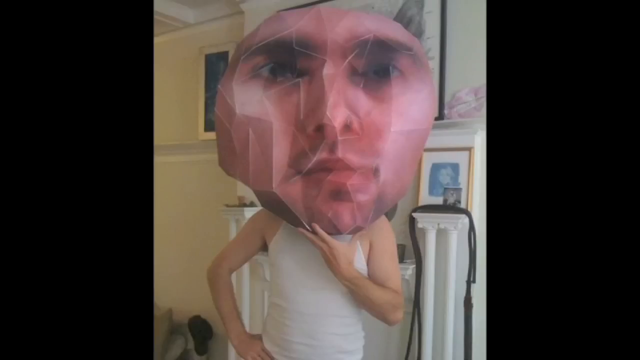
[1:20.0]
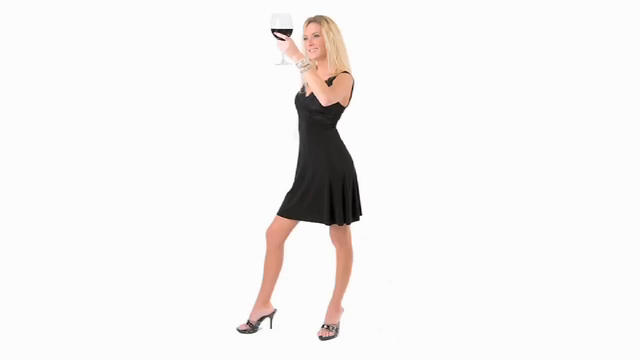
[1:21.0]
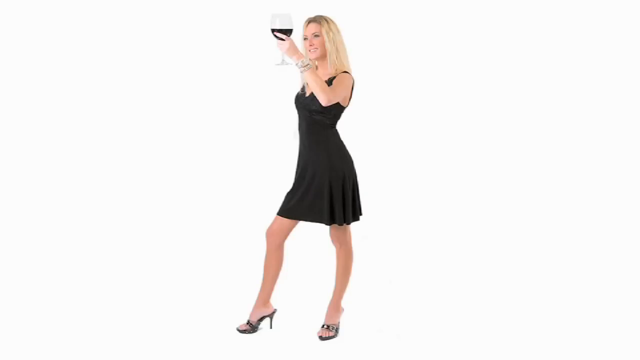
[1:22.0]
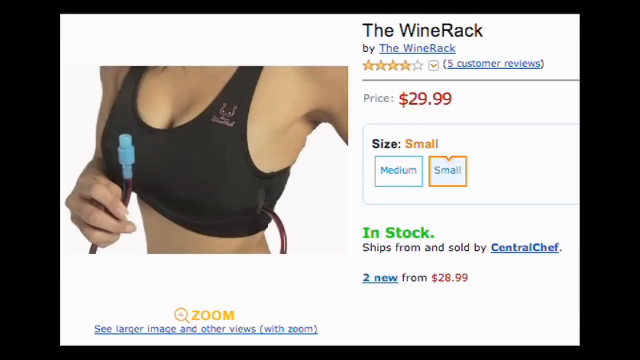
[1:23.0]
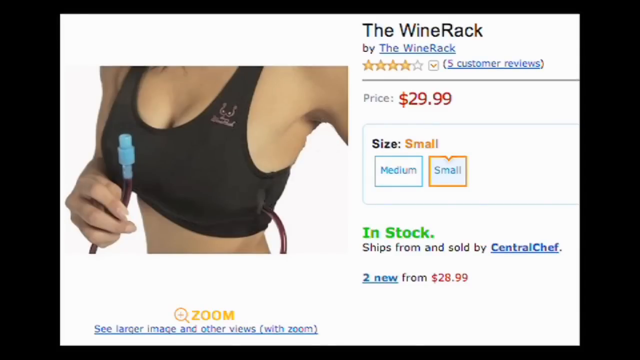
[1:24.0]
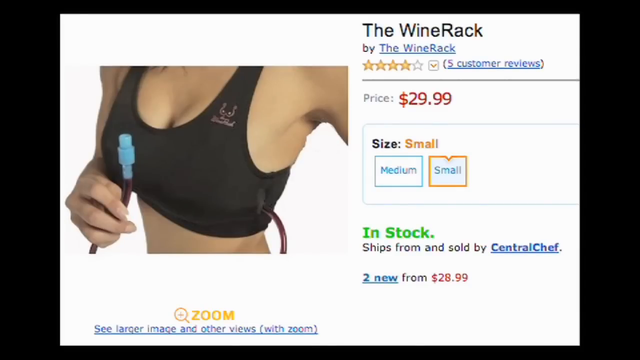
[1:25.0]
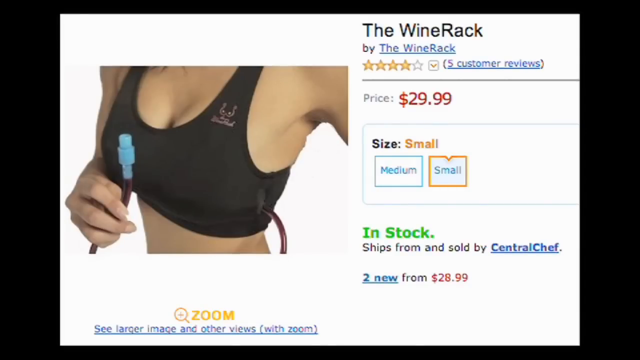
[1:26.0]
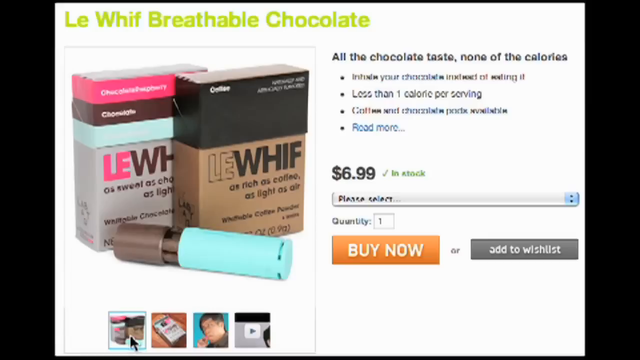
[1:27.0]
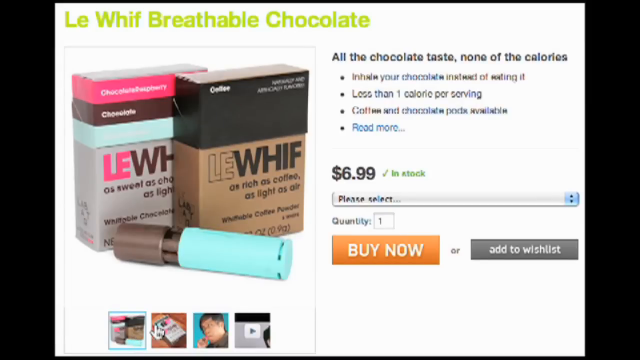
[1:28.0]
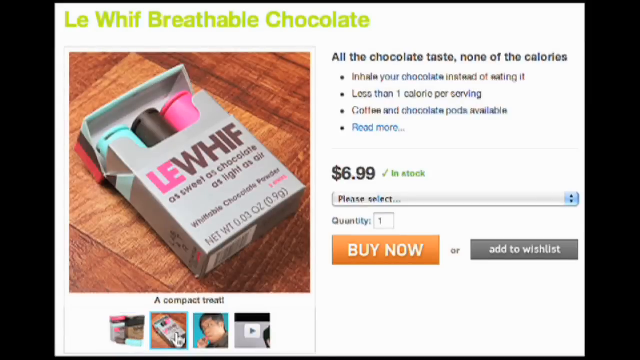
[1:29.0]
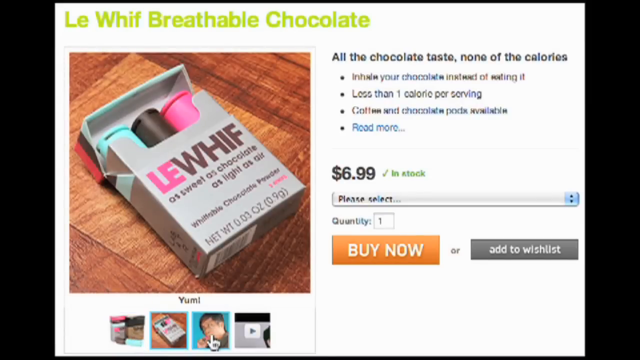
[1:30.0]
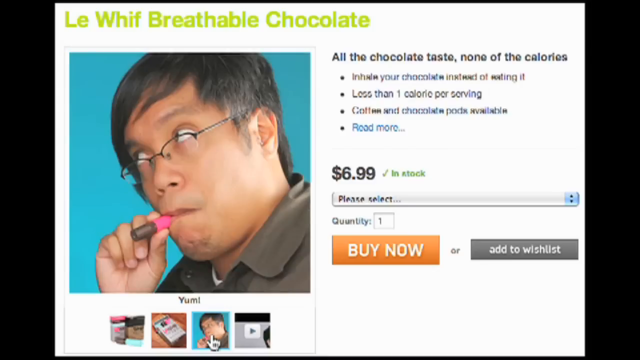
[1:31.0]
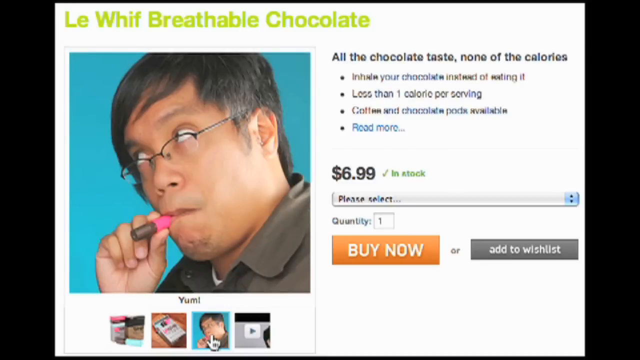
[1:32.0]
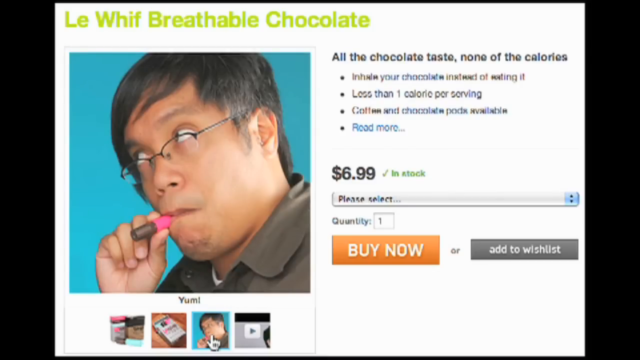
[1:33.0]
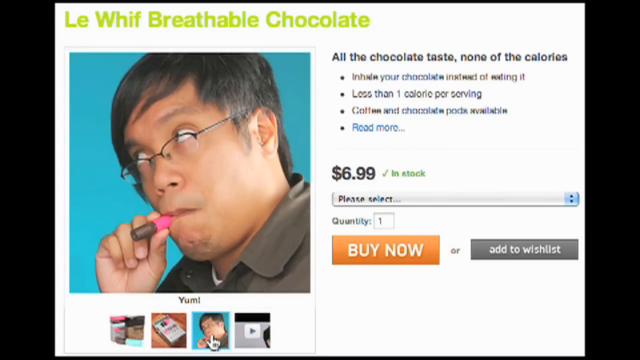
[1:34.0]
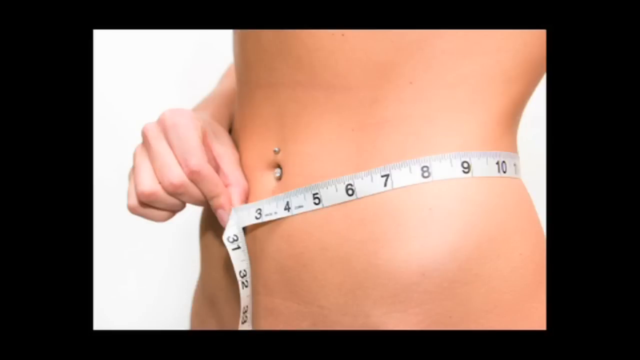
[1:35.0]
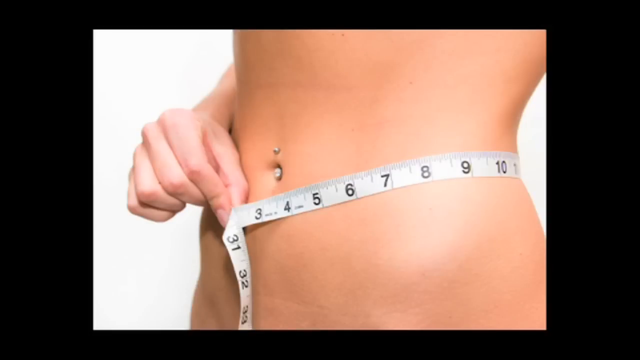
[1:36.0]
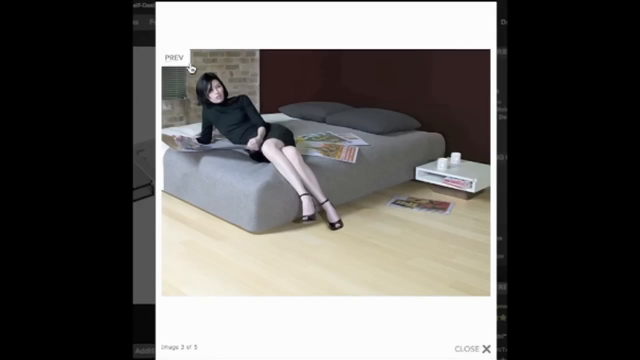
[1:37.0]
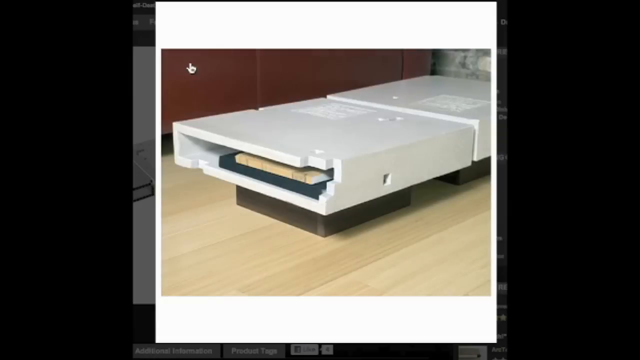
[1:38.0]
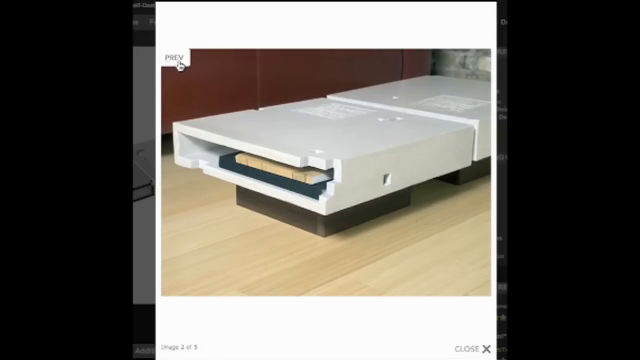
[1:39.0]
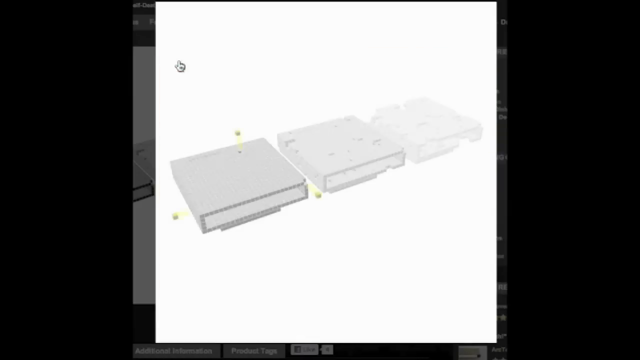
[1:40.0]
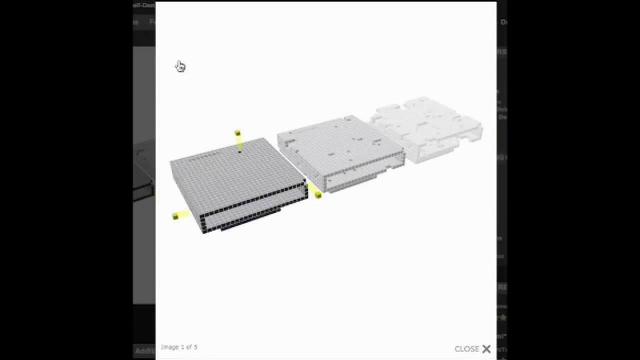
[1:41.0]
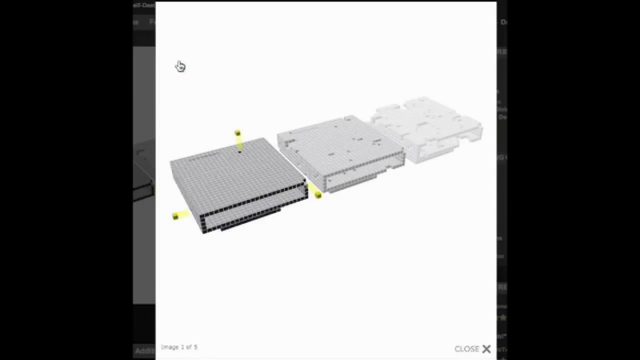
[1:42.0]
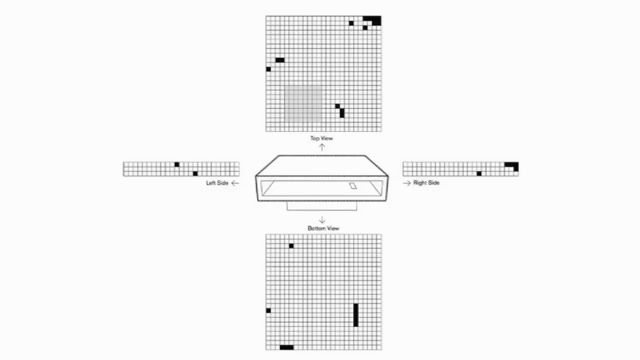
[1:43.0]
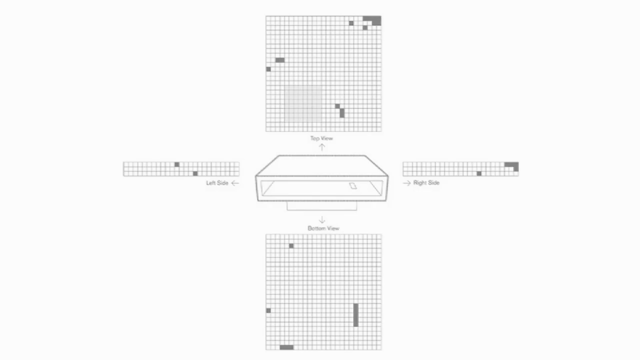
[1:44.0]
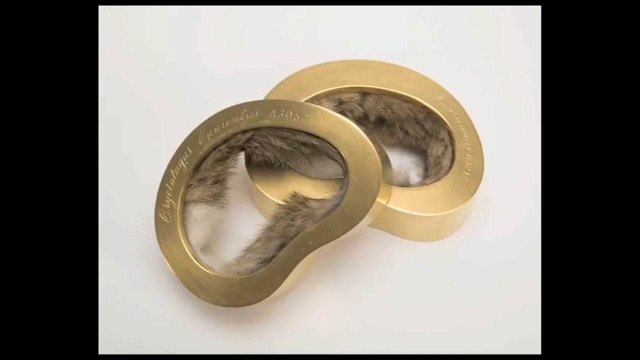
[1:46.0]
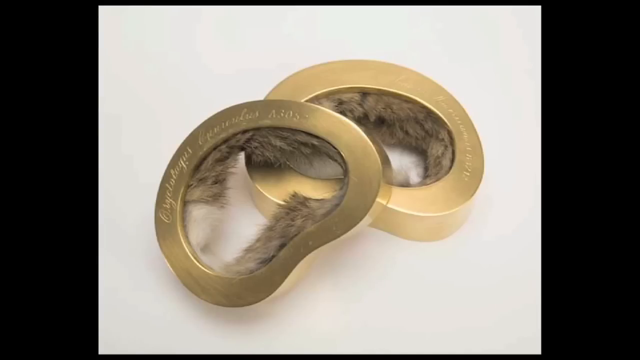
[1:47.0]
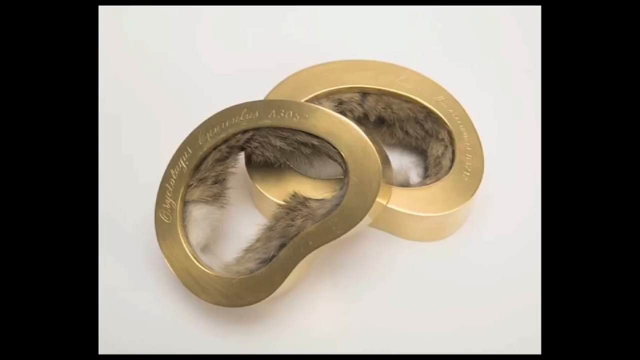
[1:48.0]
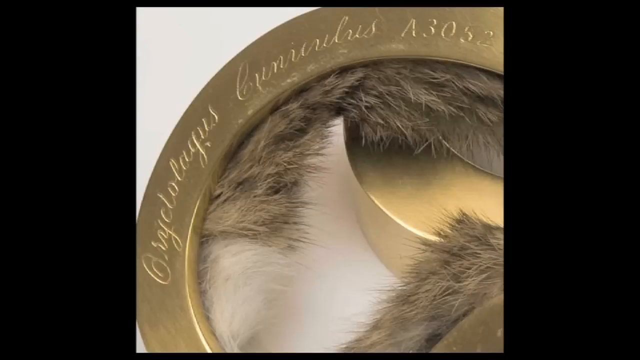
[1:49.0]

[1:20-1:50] A guy seems to be holding up a gigantic picture of his own face in front of him. The video cuts to a blonde woman in a black dress holding up a glass of wine. Next, a person wearing a sports bra seems to have a tube connected to it, holding the tube with the right hand; the tube has a blue nozzle. Text in the top right reads "the wine rack" with the price "$29.99". Another product follows, with green text reading "Le Whif, breathable chocolate" and text on the right reading "all the chocolate tastes, none of the calories" and "$6.99". The product is sold in gray packs, and somebody seems to bite into it. Then a woman's torso appears with a white measuring tape with black letters, followed by another woman sitting on what looks like a gray bed. Another product kind of looks like it has a white plastic casing, and then two golden rings with fur inside them are shown.